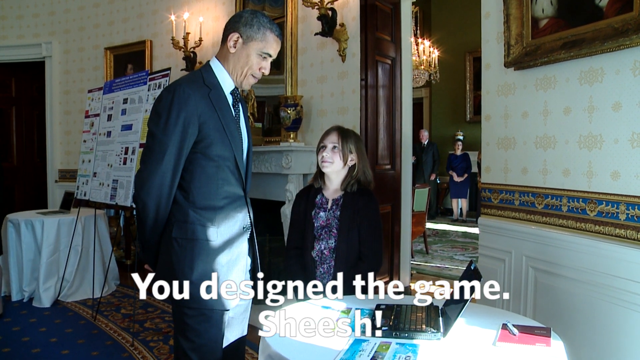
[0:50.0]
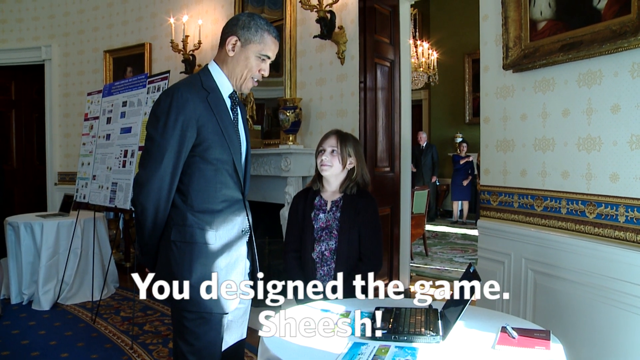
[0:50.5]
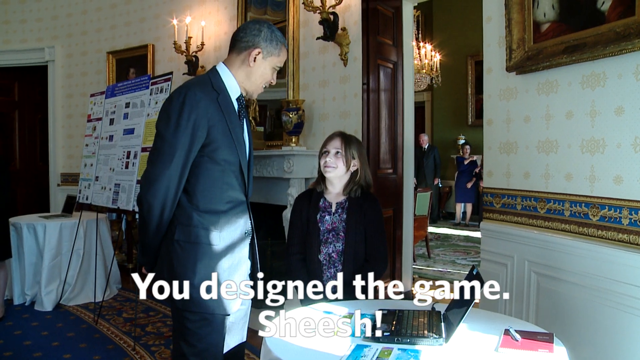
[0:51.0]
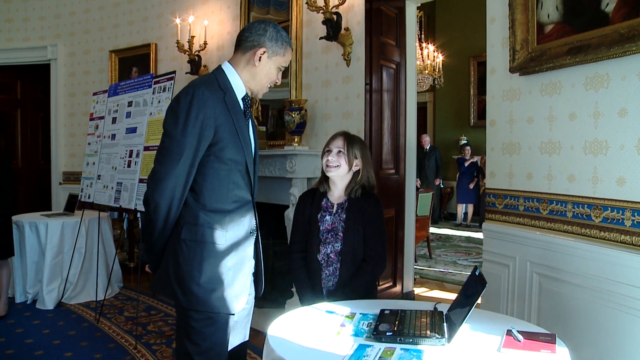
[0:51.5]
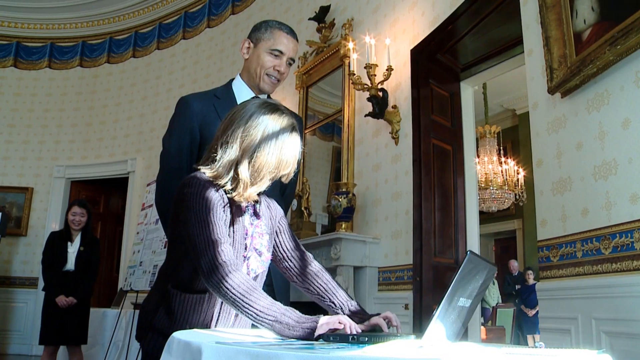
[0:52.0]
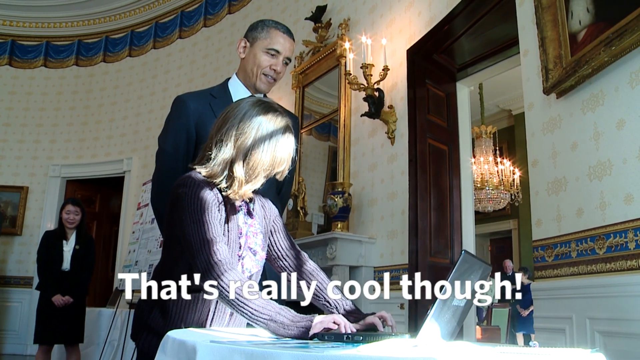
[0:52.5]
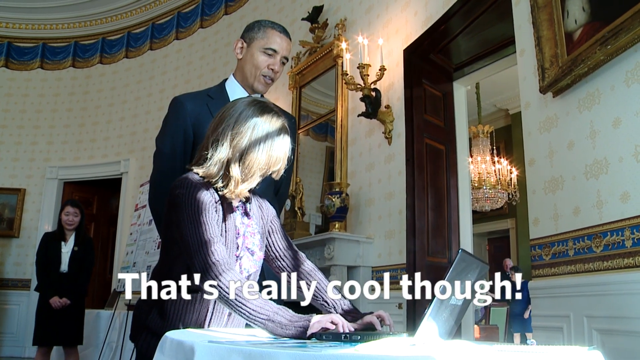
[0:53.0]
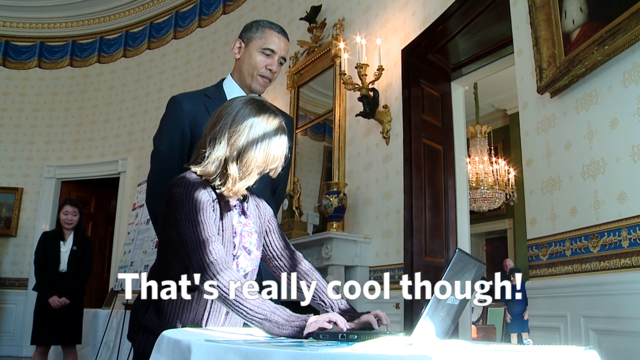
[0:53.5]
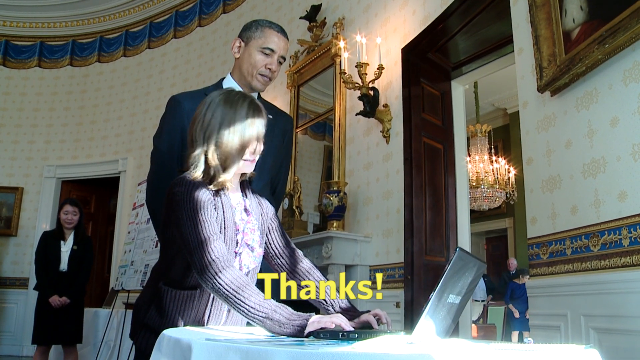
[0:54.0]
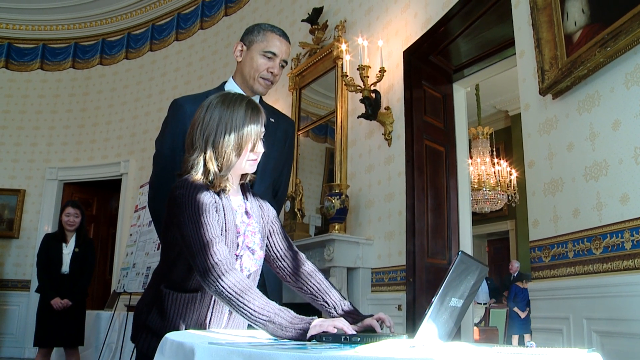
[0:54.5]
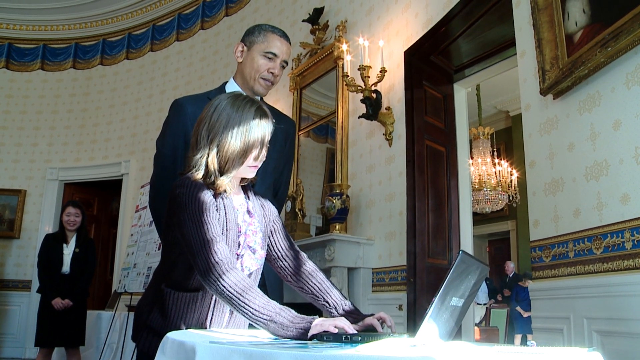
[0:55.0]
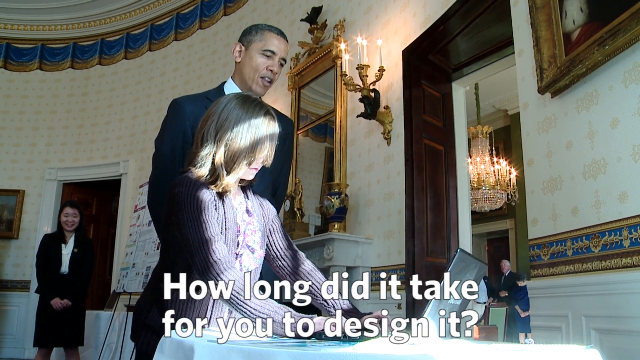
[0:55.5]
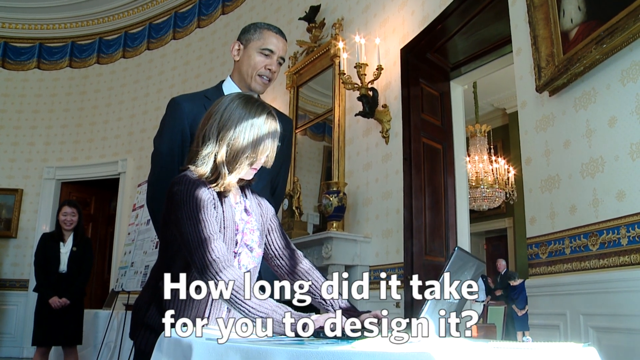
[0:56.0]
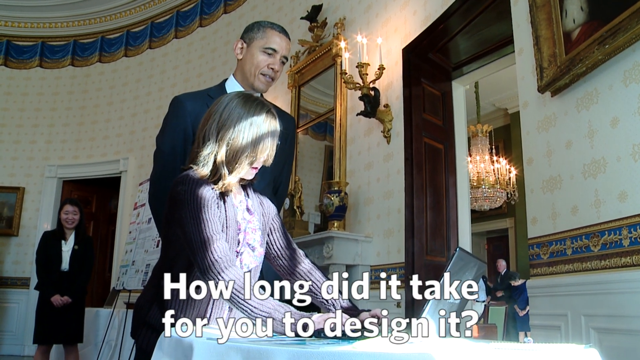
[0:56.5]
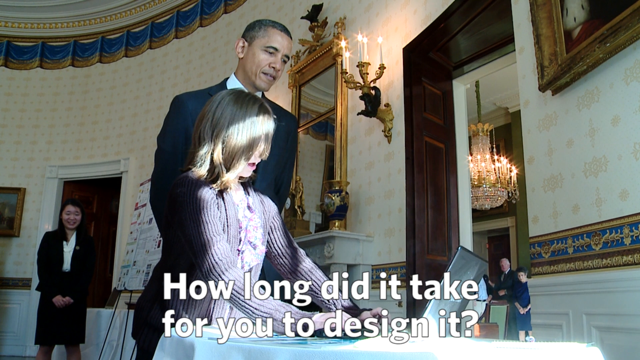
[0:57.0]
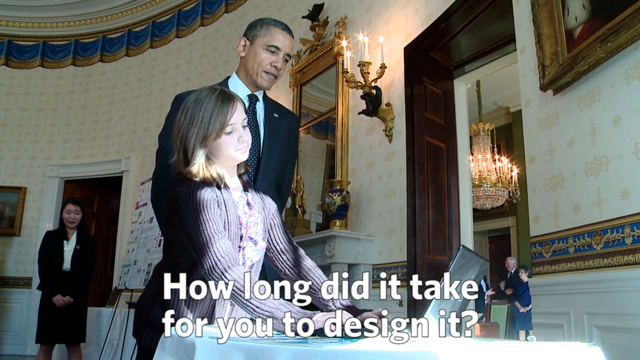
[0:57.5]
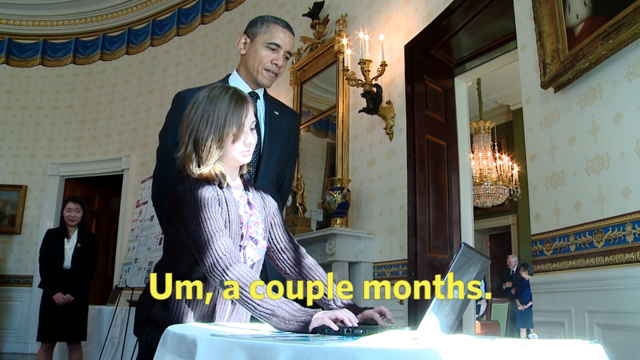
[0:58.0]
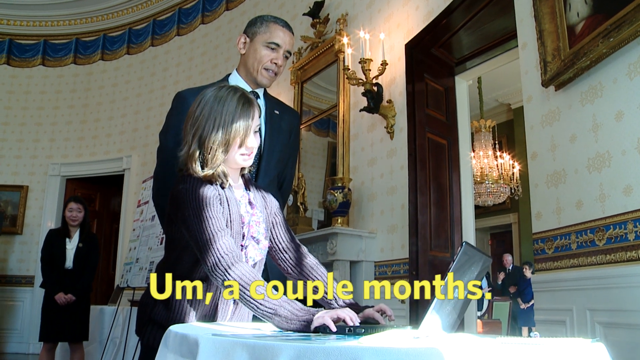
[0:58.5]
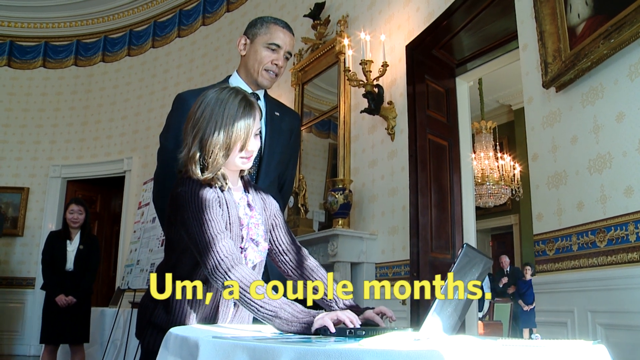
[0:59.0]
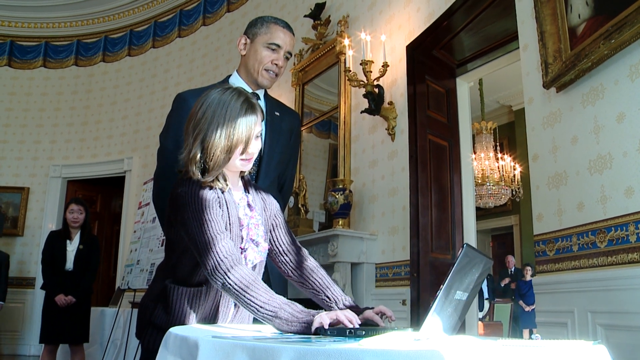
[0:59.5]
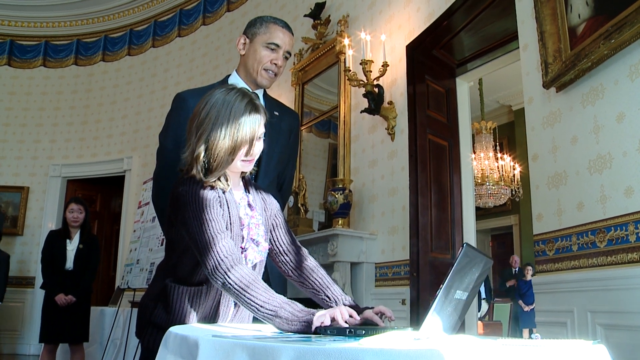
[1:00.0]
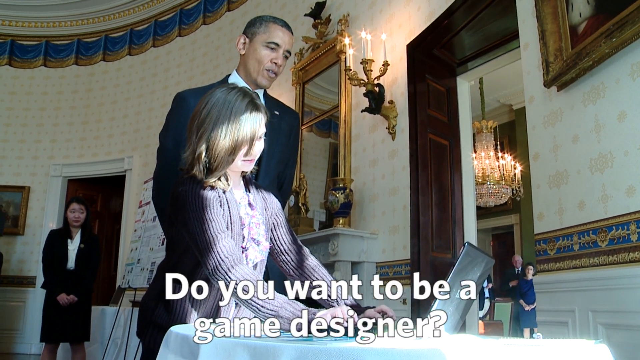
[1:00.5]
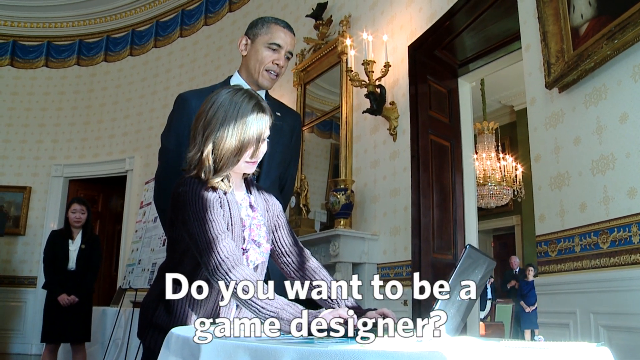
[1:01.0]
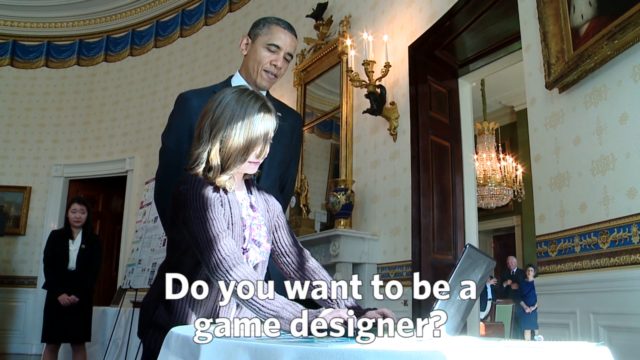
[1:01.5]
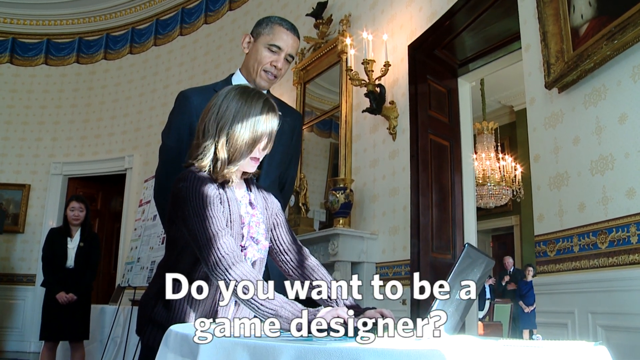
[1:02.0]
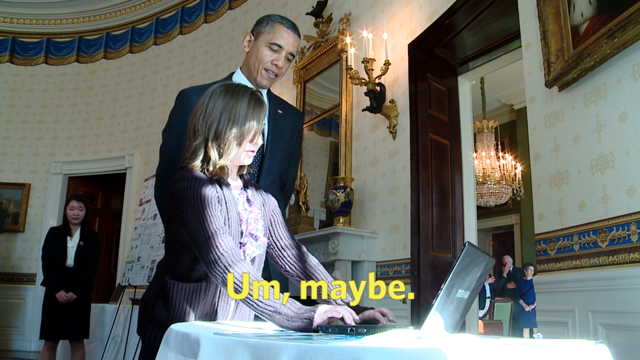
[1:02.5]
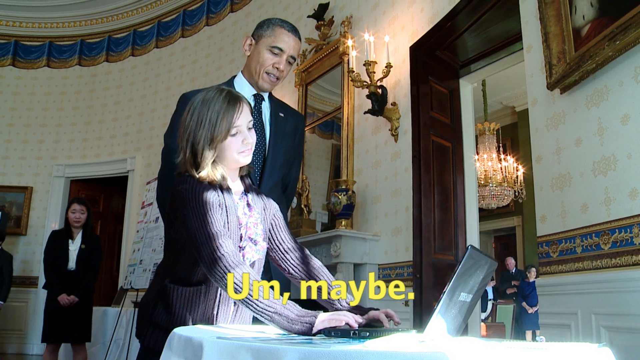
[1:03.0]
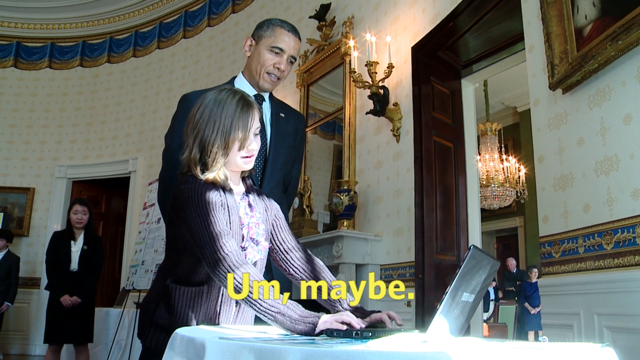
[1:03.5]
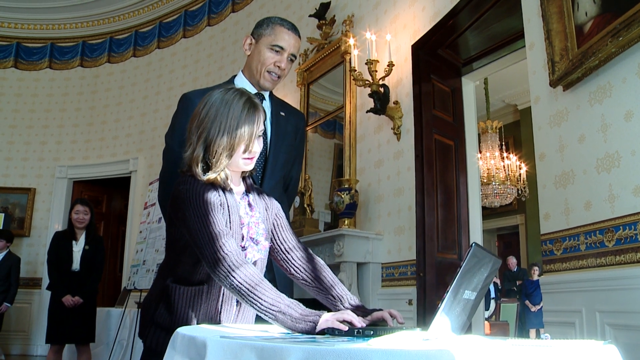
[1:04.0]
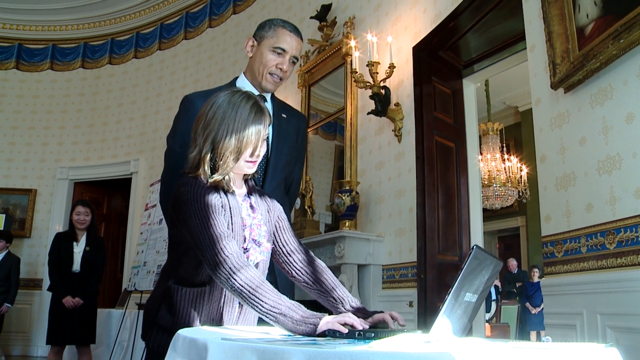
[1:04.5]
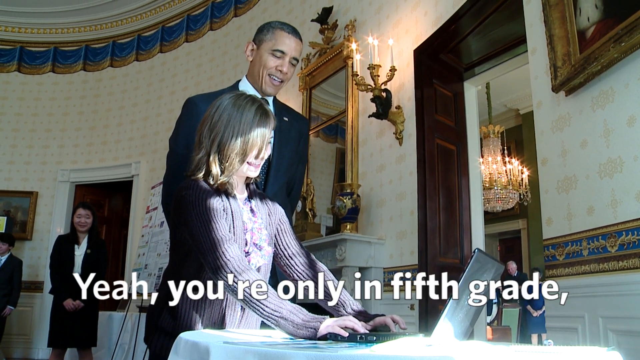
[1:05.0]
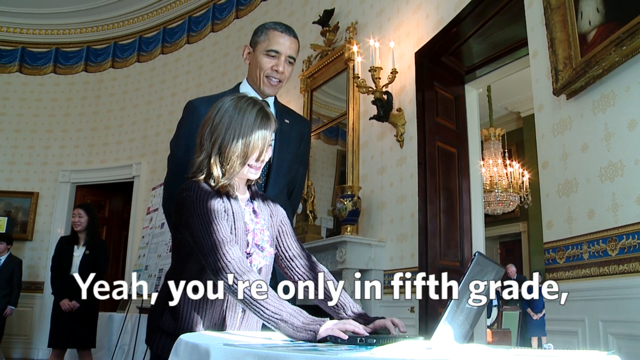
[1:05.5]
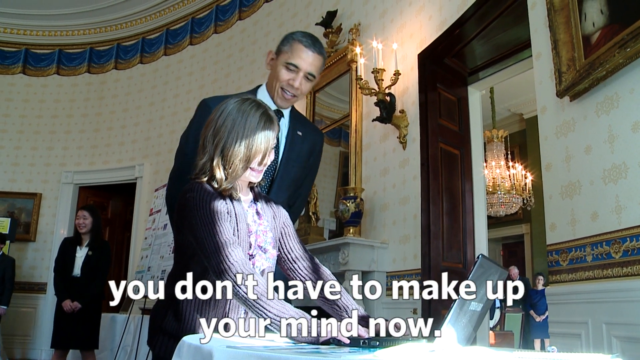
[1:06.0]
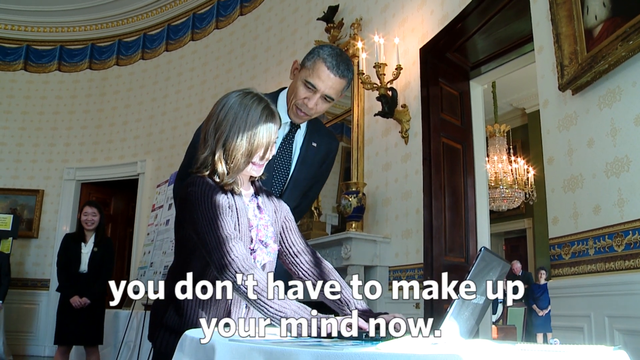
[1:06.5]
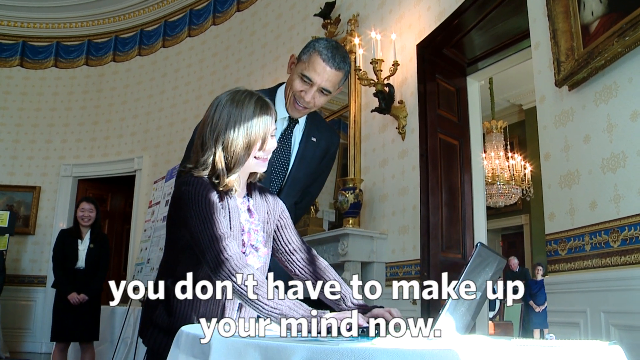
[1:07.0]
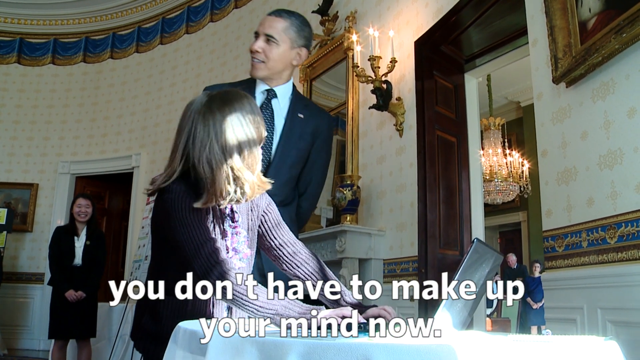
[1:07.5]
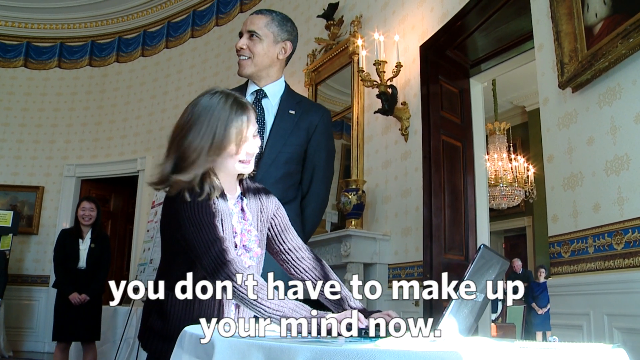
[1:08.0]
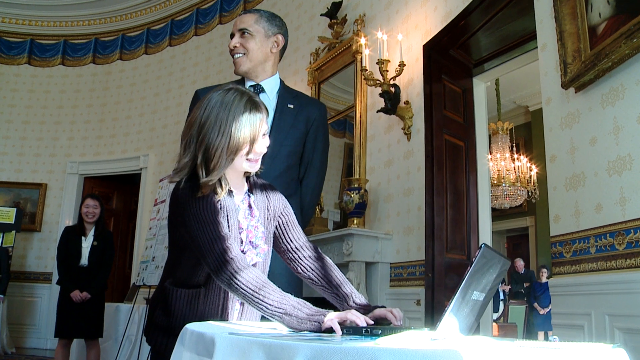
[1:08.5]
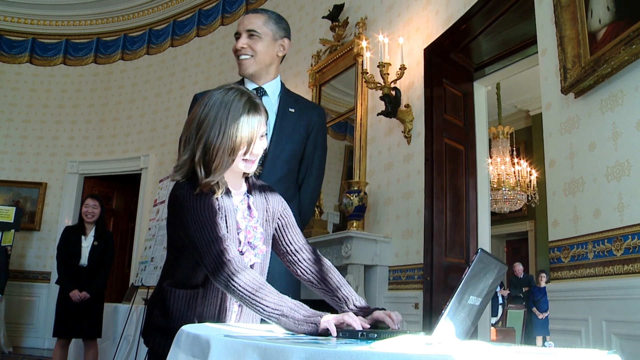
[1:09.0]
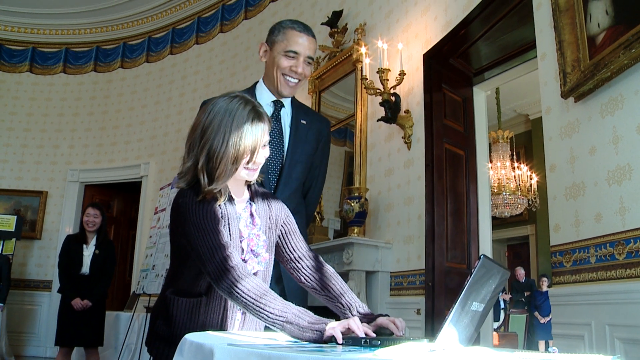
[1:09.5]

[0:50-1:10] In the Oval Office and inside the White House, high school students who participated in a science fair are shown, along with some younger students, maybe even middle school age. Barack Obama talks with different students, asking them questions and analyzing their inventions. He talks to a fifth grader who uses a computer to show different designs she has made; he says it is very cool and asks how long it took her to design them, and she says maybe a couple of months. They kind of laugh and interact together. Obama is much taller than the young student. A few other students in the background stand near their projects, listening in on the conversation and laughing along with the fifth grader and Obama.